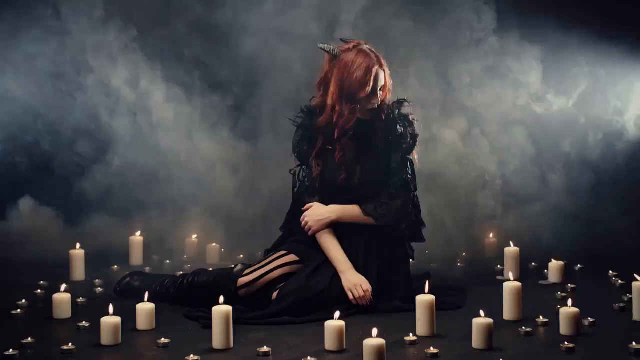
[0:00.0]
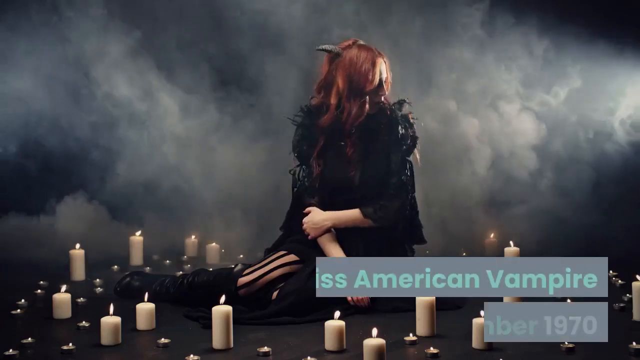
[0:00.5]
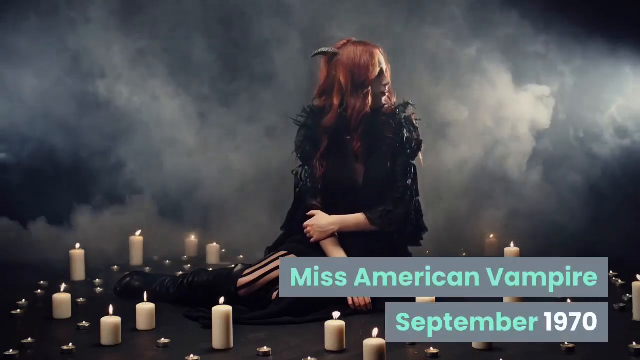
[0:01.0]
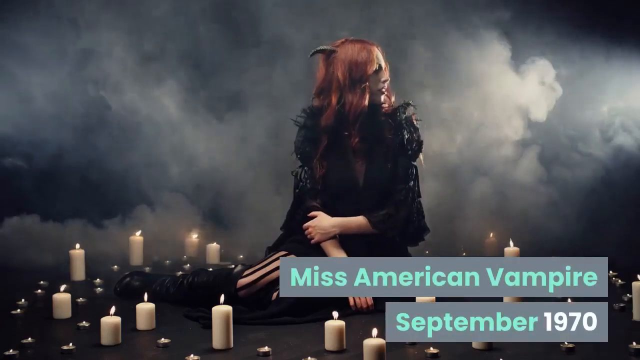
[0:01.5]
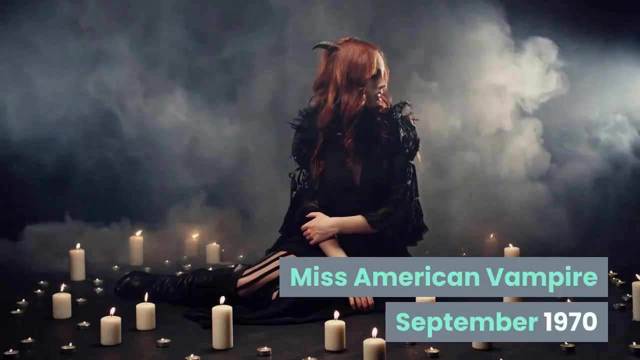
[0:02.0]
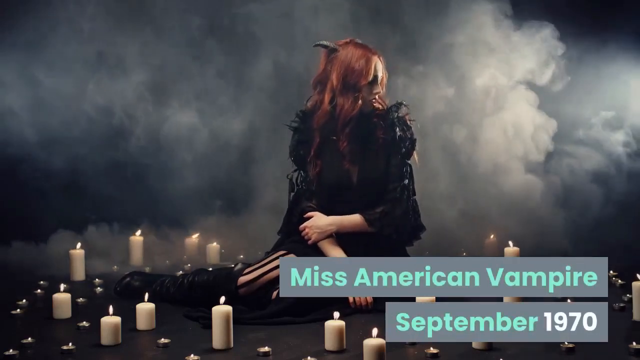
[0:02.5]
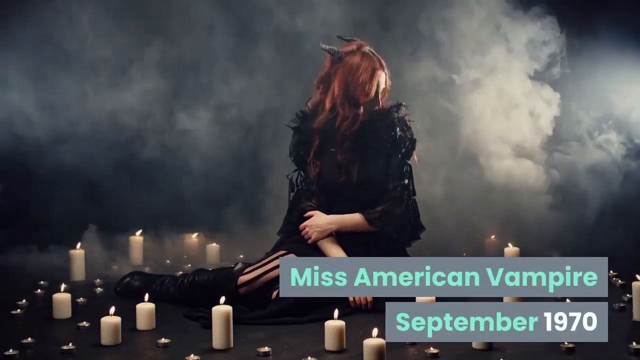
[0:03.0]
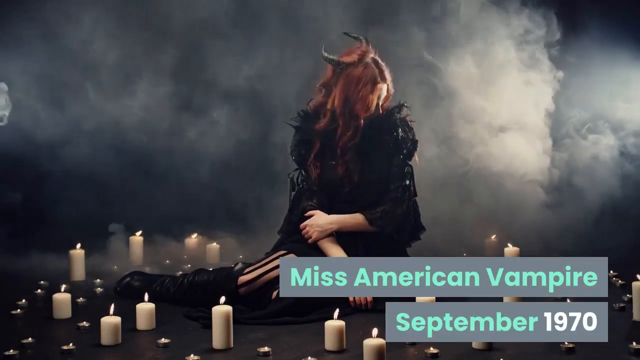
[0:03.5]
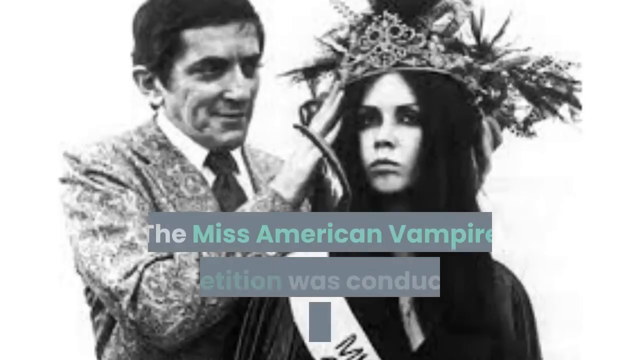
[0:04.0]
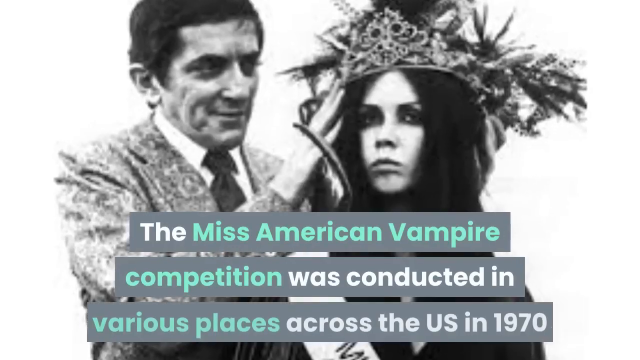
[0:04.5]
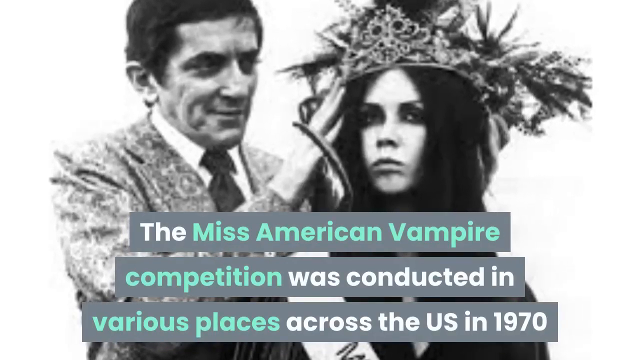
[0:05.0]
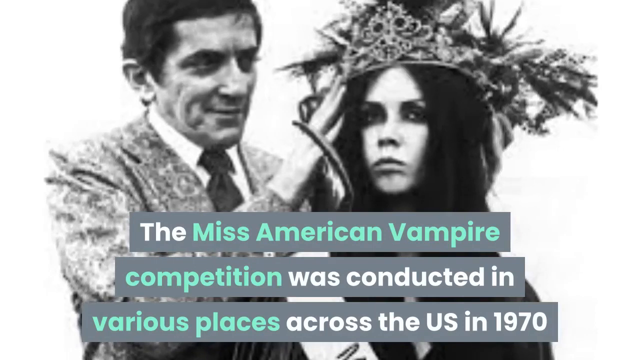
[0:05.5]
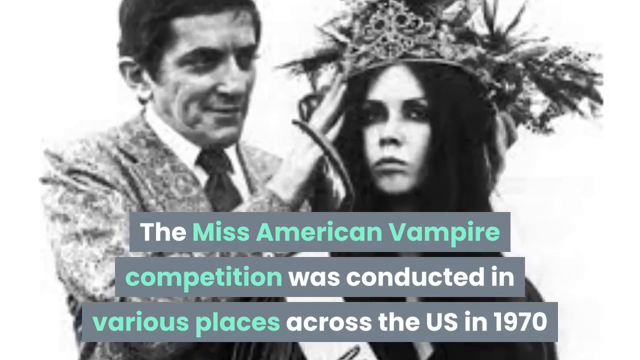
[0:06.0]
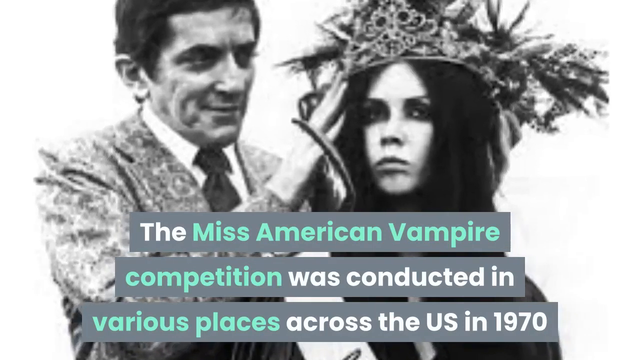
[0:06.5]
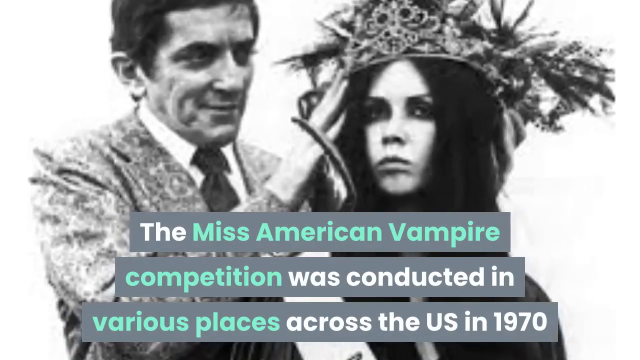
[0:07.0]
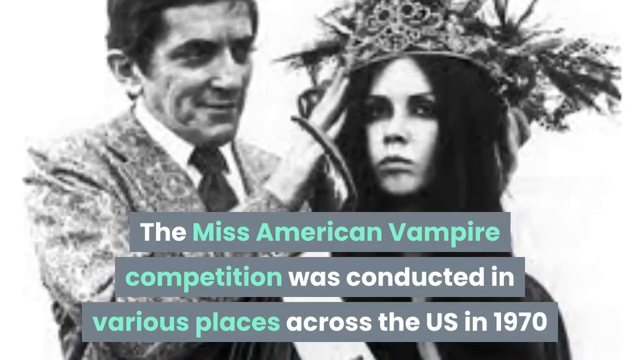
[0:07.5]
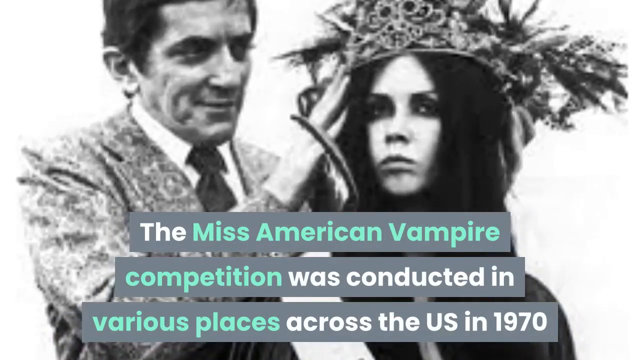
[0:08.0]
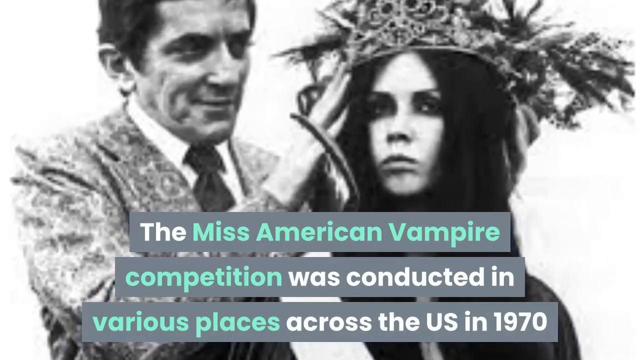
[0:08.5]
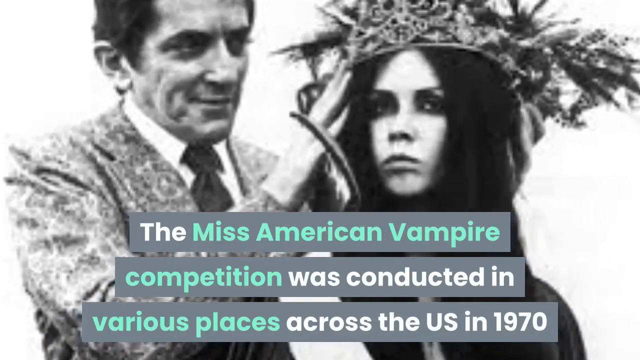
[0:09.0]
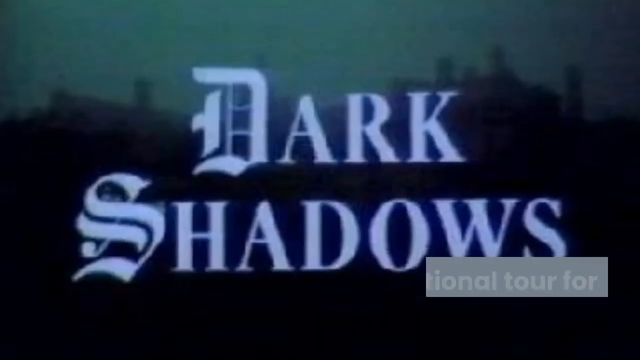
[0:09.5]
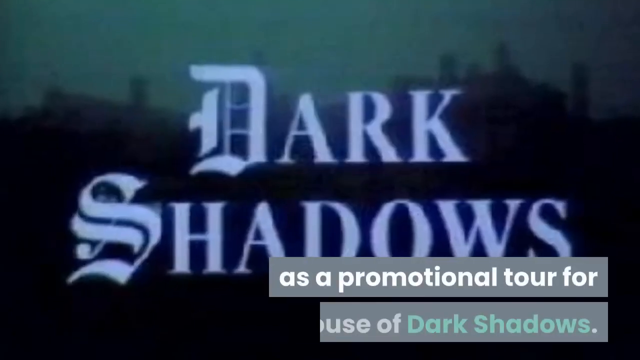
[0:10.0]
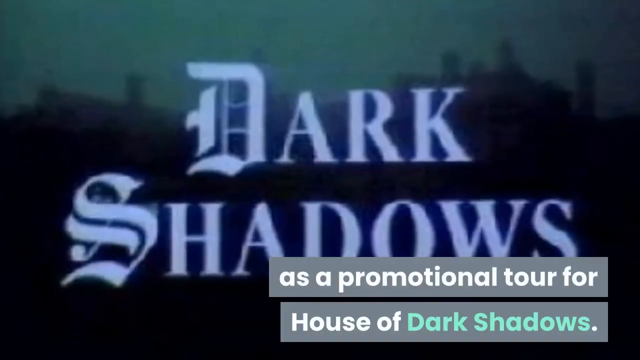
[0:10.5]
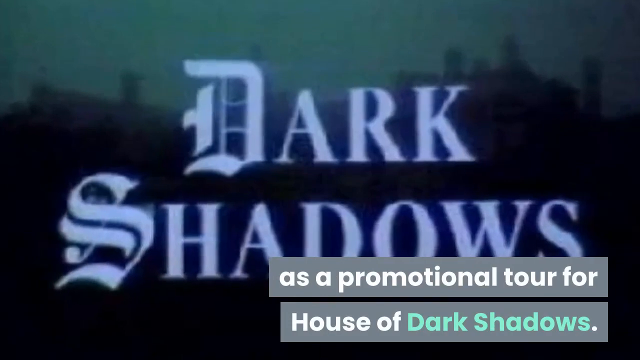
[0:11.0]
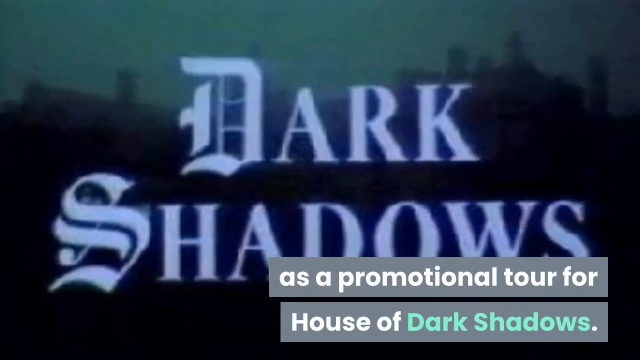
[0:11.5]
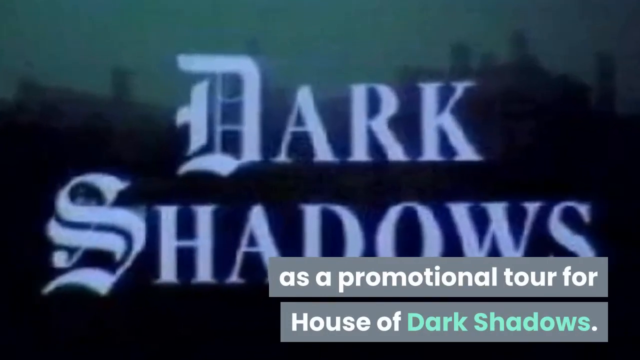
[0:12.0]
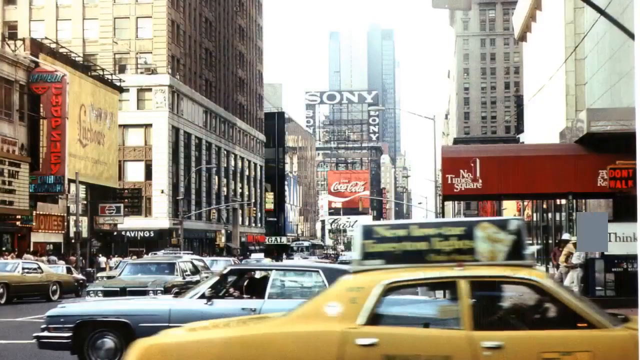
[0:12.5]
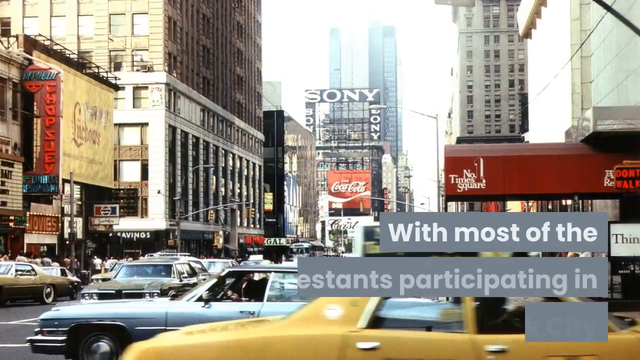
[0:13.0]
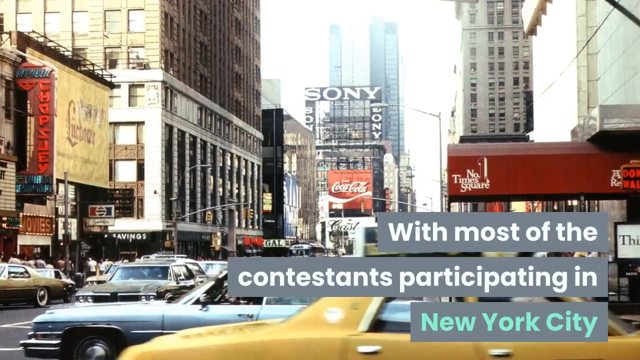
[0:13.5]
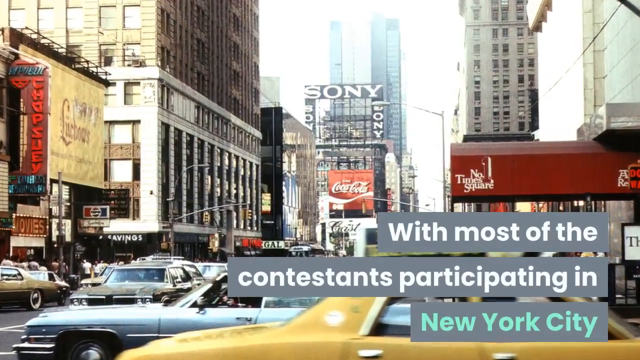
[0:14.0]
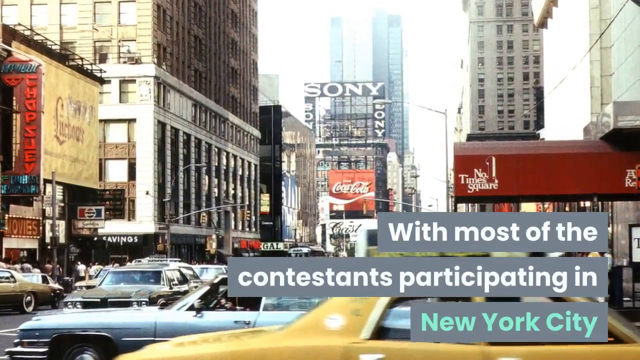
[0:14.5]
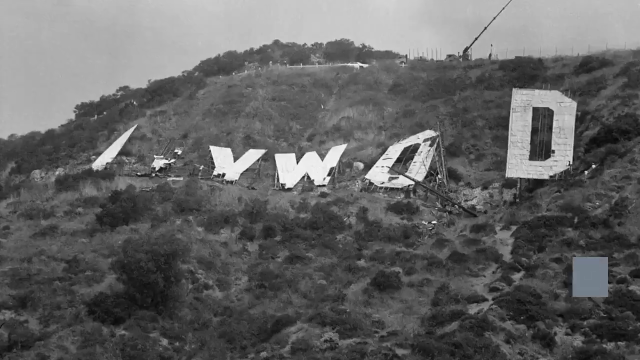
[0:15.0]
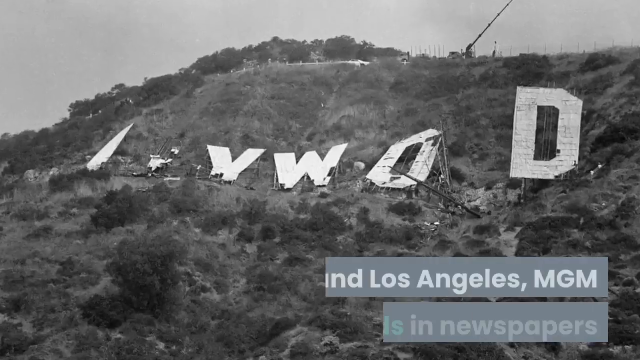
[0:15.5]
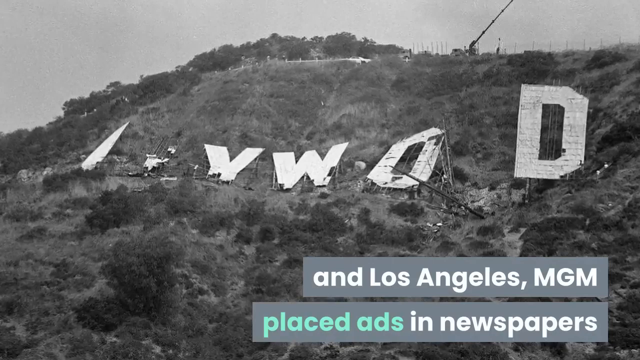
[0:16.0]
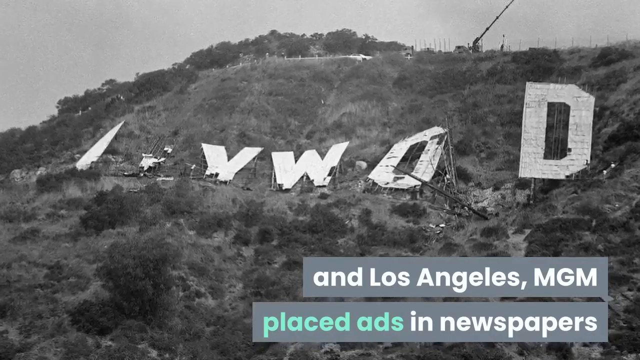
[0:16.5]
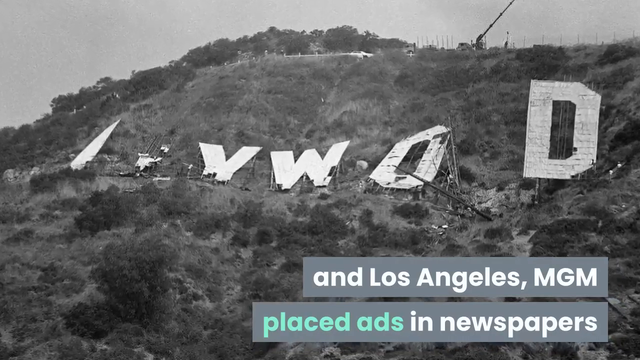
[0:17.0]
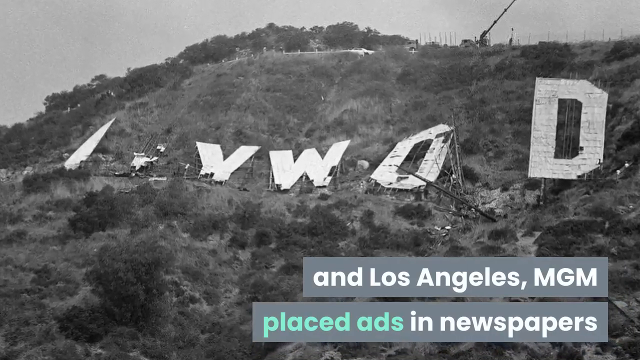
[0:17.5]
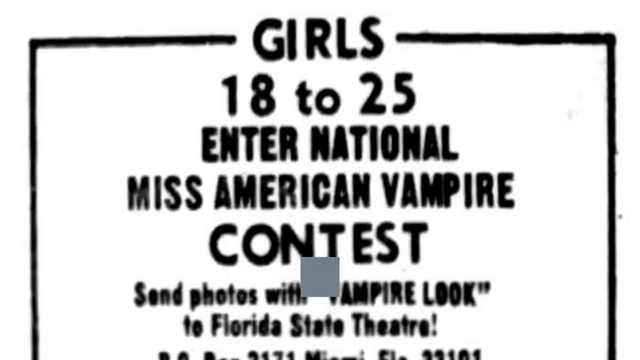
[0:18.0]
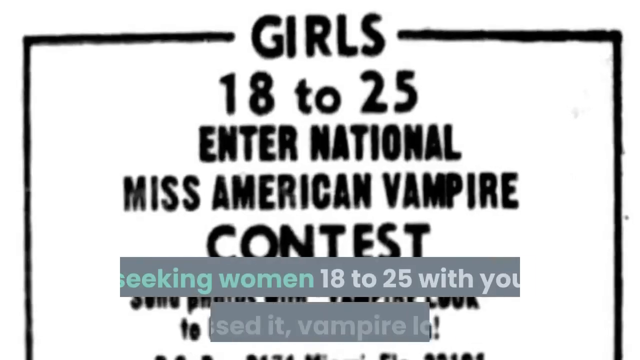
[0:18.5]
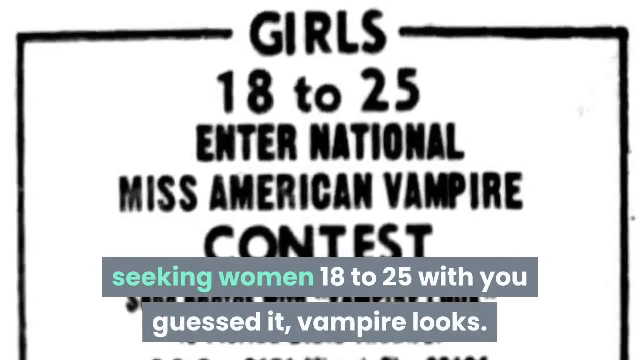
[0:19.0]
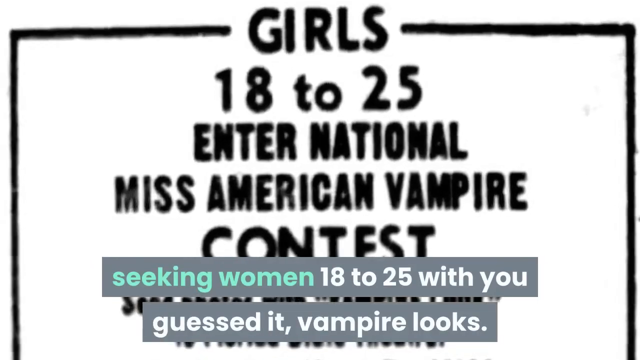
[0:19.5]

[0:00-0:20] The video opens on "Miss America Vampire 1970." A woman in all-black clothing with red hair lies on the ground with her arms crossed, surrounded by candles and smoke. She wears horns, does not seem happy, and lies alone in darkness. Text says "the Miss American Vampire Competition was conducted in various places across the U.S. in 1970," alongside a picture of a man and a woman; the woman wears some sort of crown on her head. Further text mentions a promotional tour for House of Dark Shadows, with the most contestants participating in New York City and Los Angeles, seeking women 18 to 25.